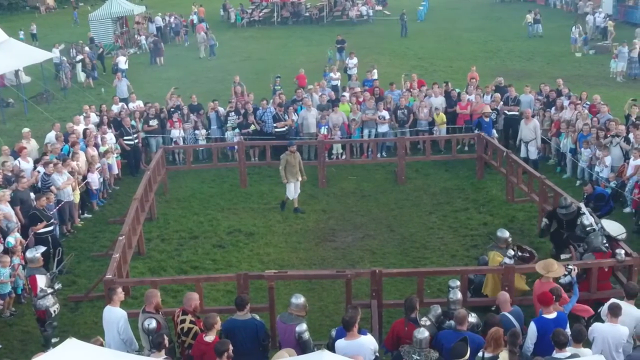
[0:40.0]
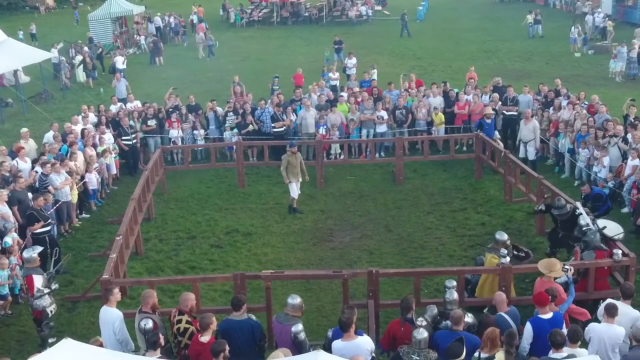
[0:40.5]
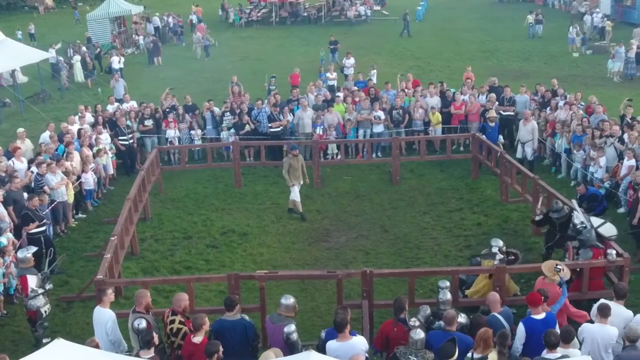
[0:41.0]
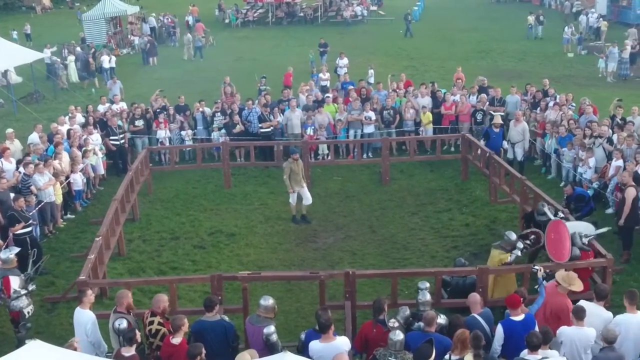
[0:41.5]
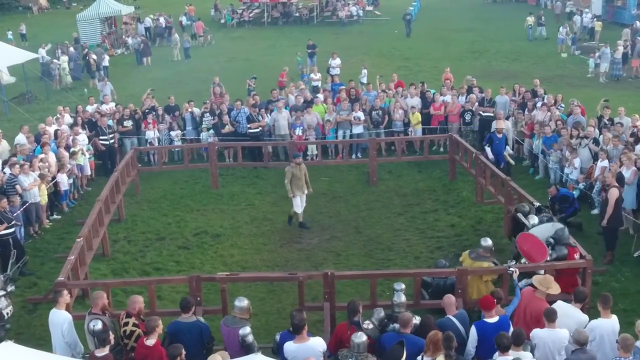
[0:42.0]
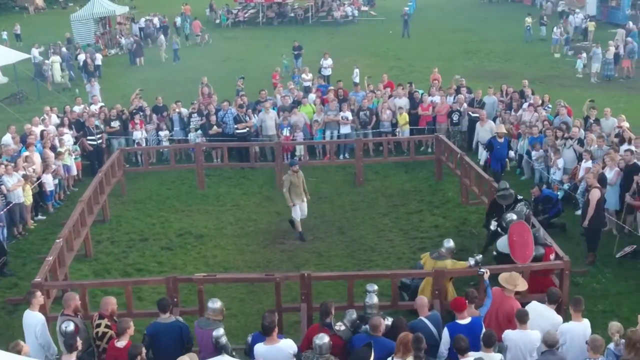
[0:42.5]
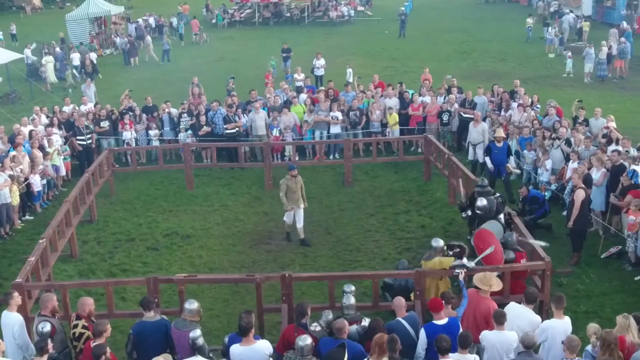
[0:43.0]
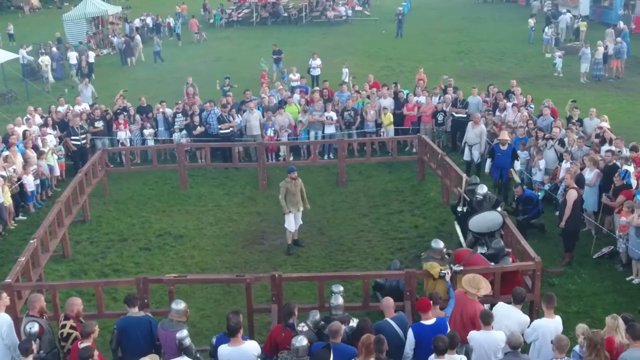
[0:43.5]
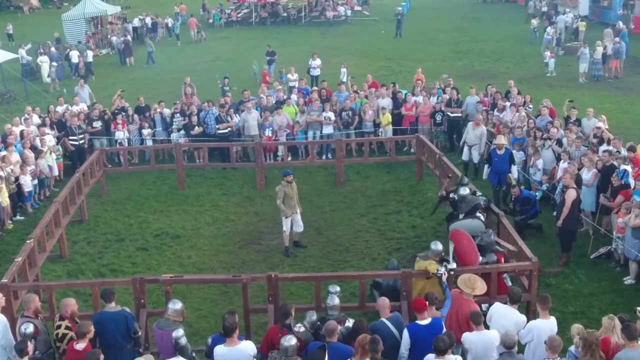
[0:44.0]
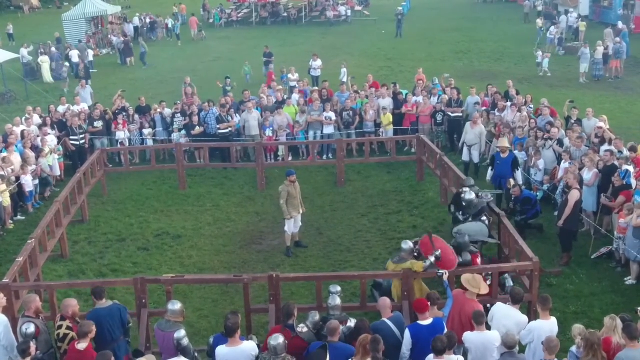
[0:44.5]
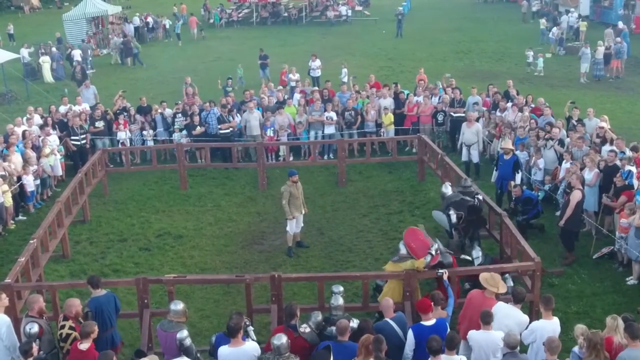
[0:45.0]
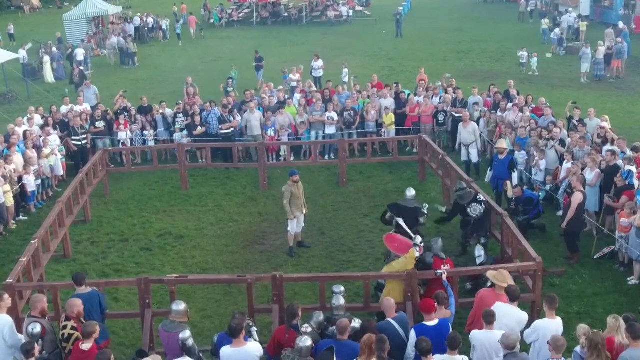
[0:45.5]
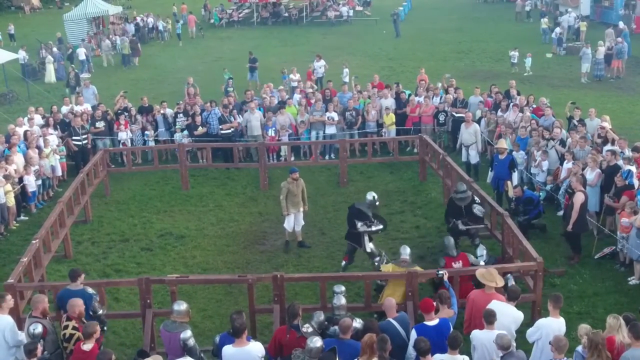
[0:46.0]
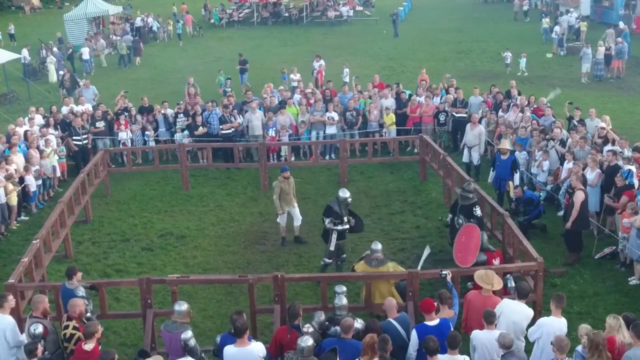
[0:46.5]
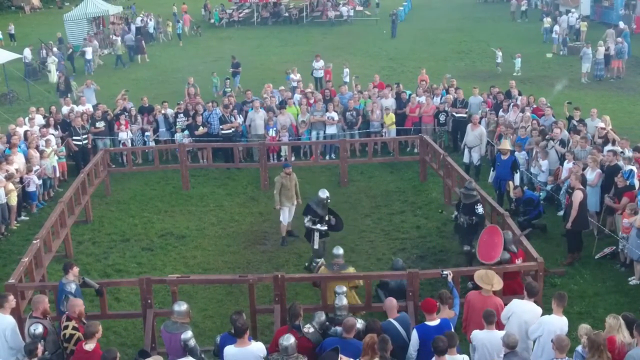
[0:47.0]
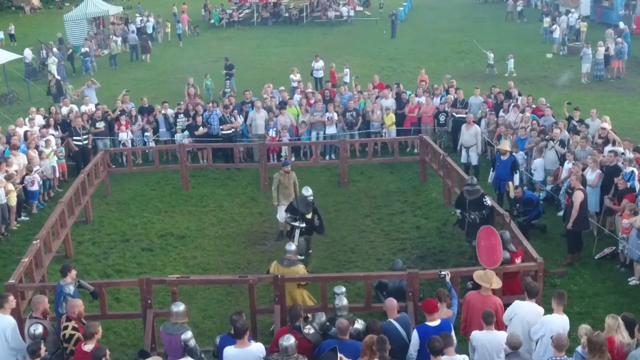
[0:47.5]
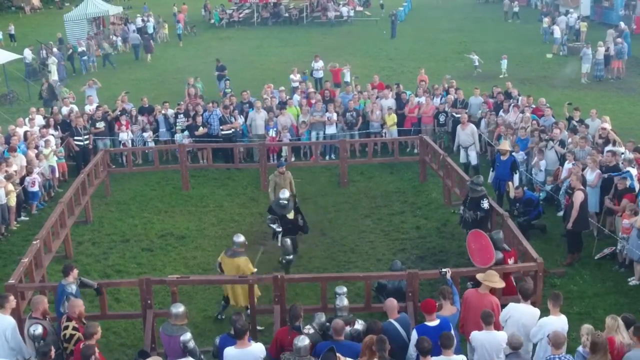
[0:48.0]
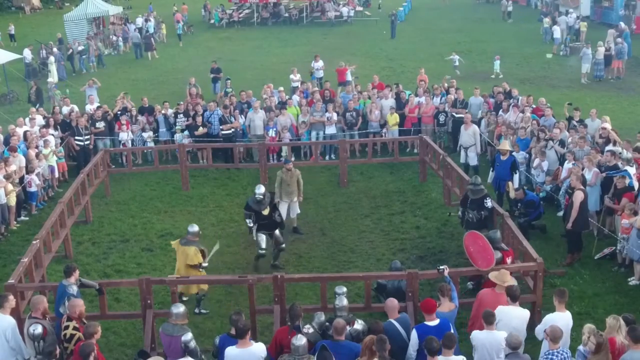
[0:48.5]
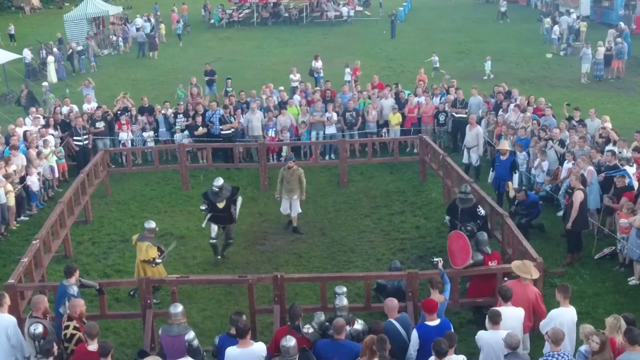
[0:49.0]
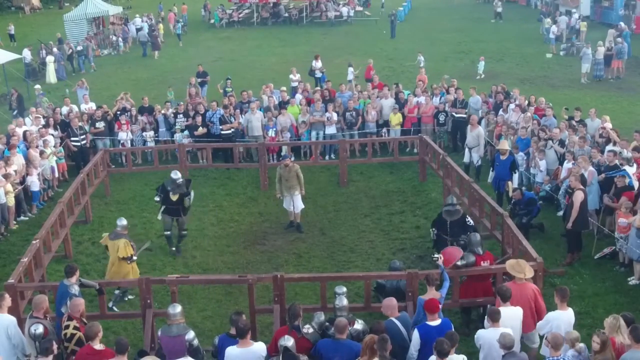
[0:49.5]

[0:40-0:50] The chaotic melee continues in the bottom right corner. One of the combatants now seems to be sitting down on the ground, while the others continue to struggle against one another. The person in civilian clothes is now standing in the center of the arena, closely observing the action. Toward the end, one person is standing in the bottom right corner, and the fighters seem to have gotten slightly apart from each other. The person in the bottom right has a red tabard on over his armor and a red shield.